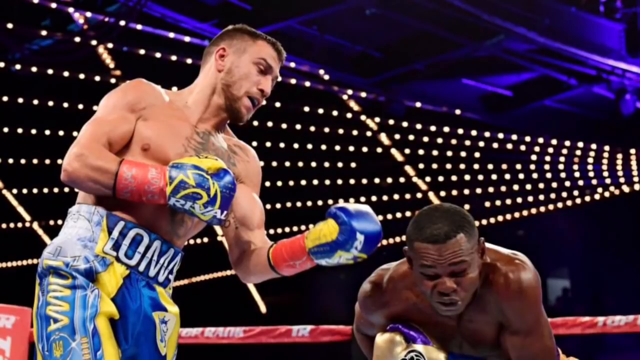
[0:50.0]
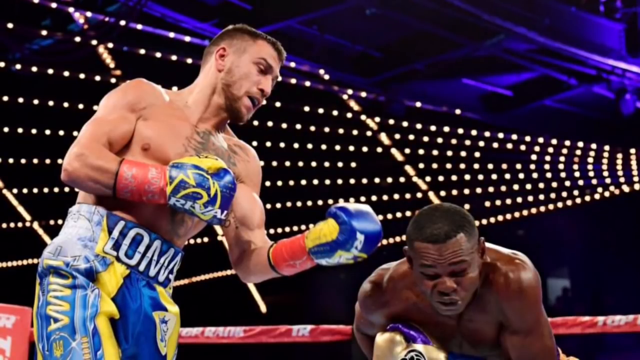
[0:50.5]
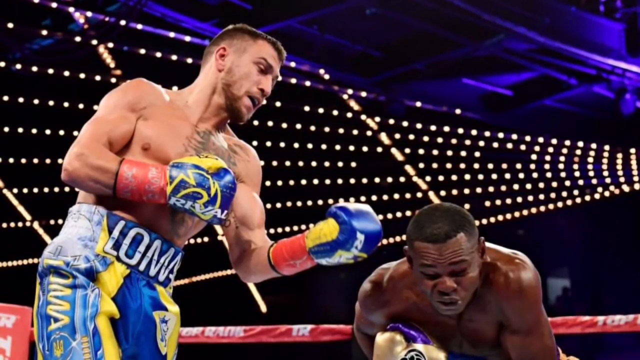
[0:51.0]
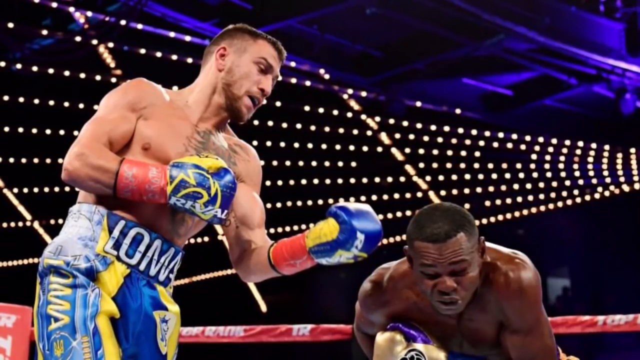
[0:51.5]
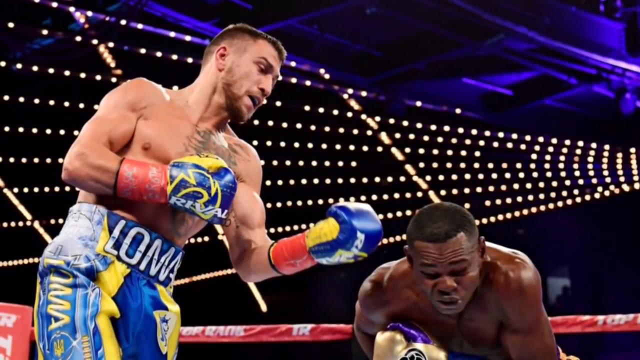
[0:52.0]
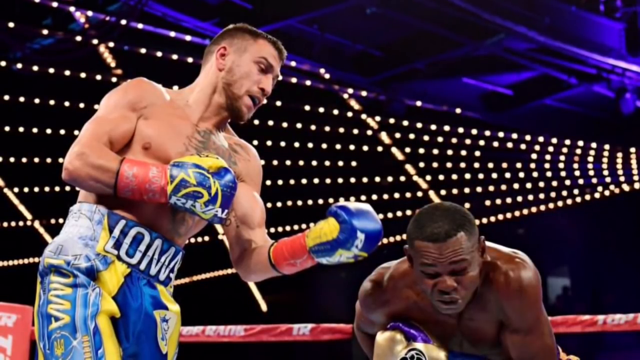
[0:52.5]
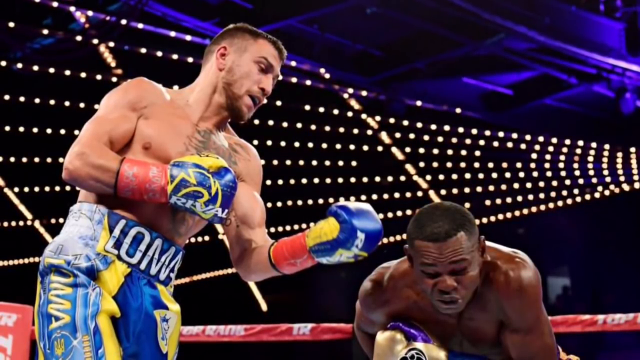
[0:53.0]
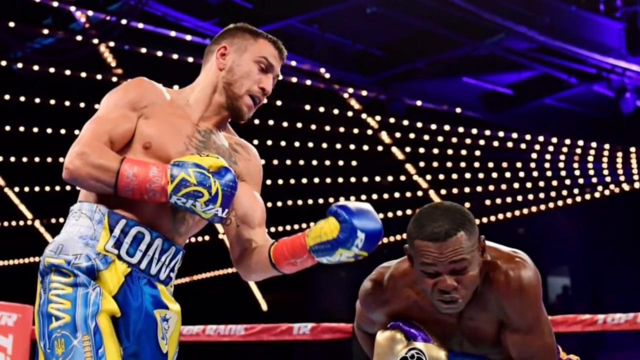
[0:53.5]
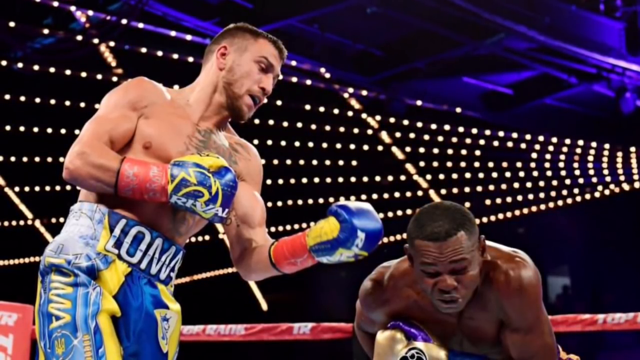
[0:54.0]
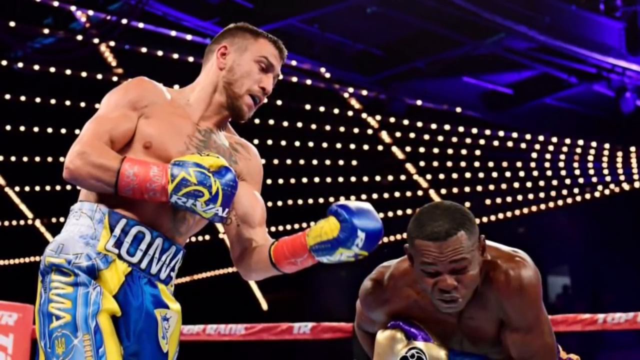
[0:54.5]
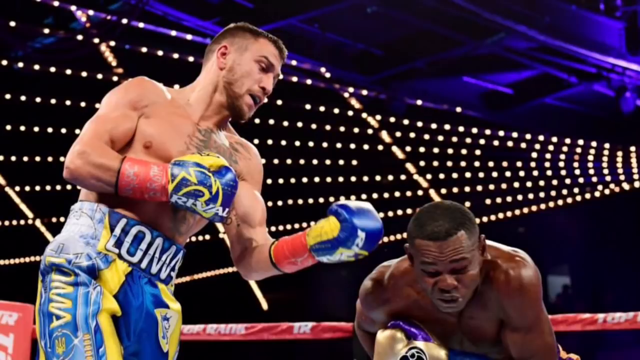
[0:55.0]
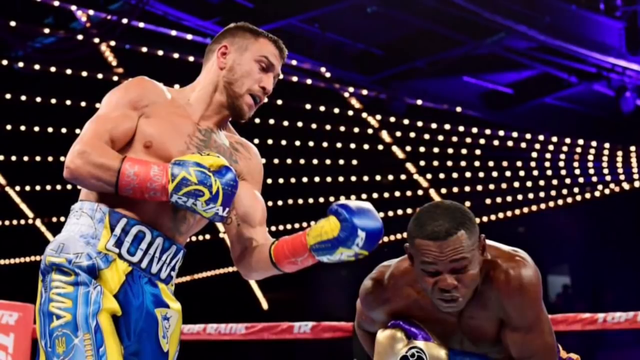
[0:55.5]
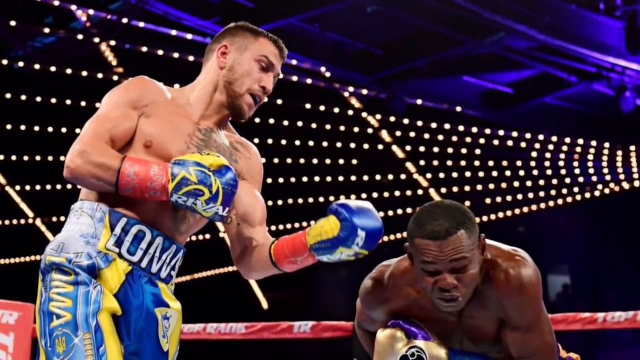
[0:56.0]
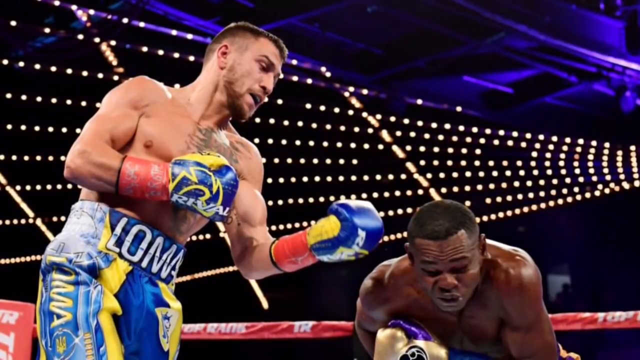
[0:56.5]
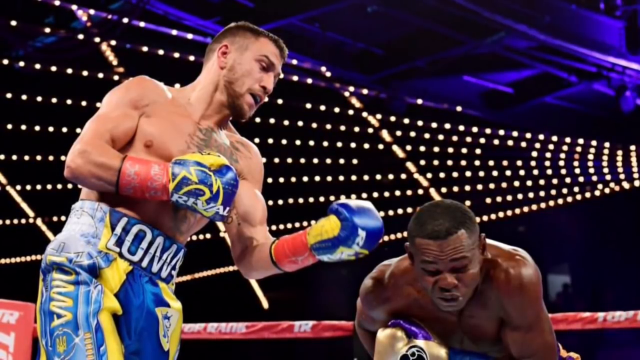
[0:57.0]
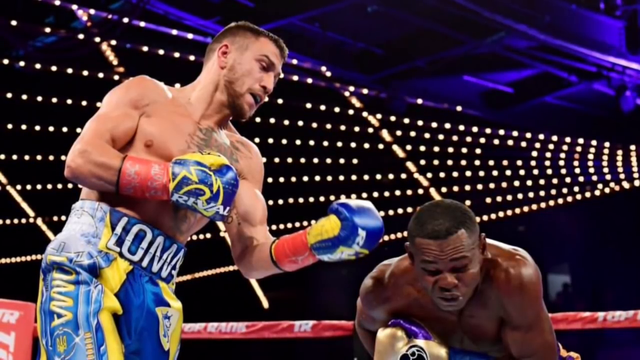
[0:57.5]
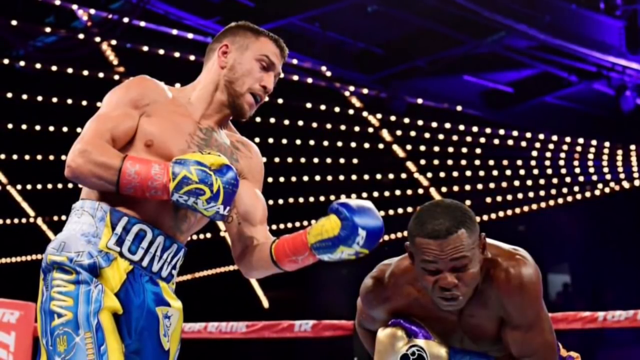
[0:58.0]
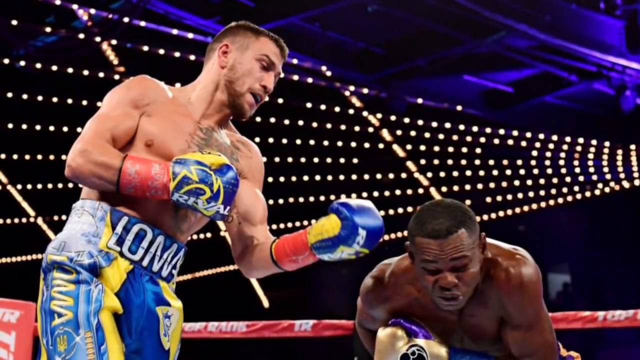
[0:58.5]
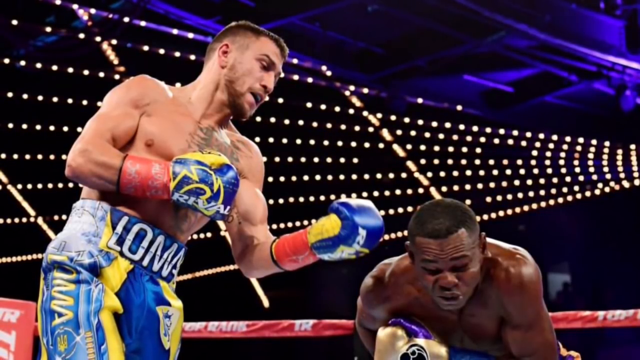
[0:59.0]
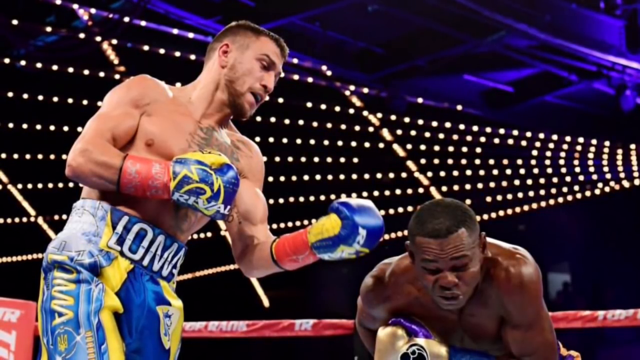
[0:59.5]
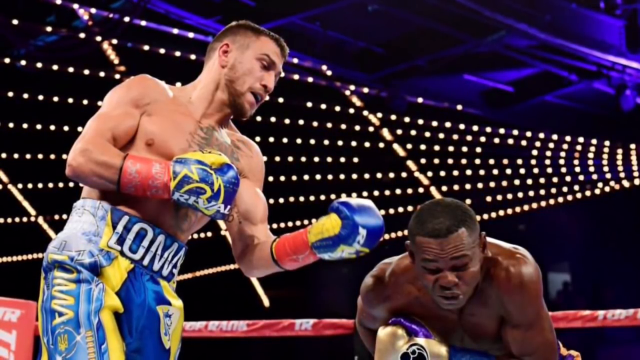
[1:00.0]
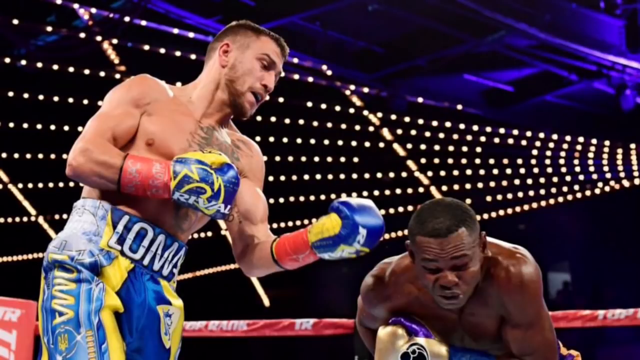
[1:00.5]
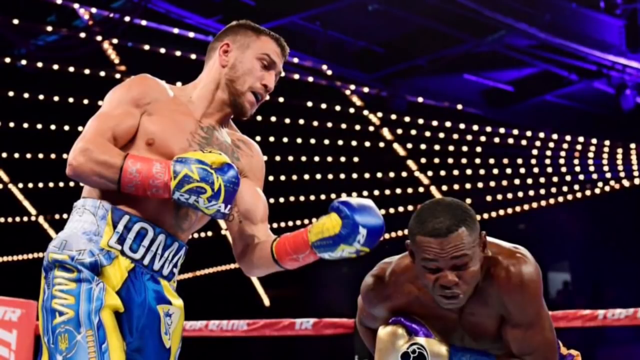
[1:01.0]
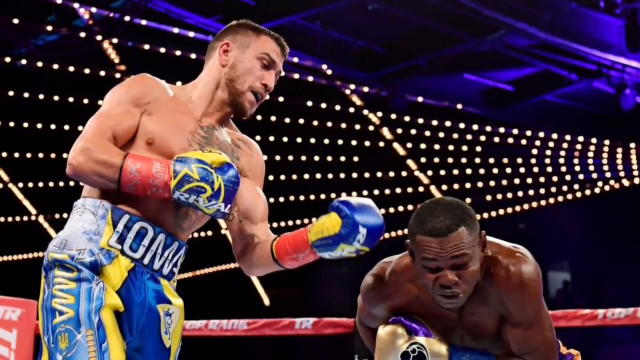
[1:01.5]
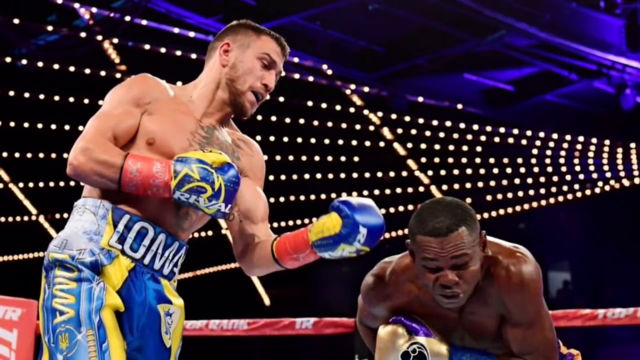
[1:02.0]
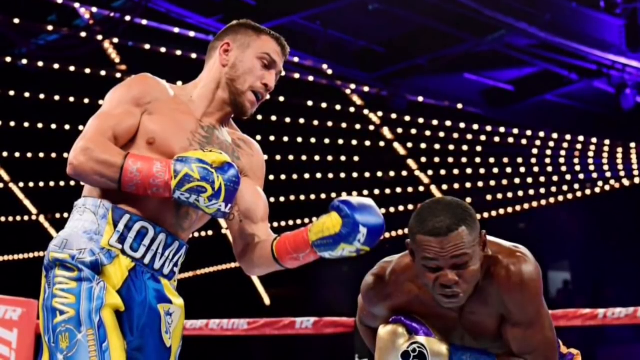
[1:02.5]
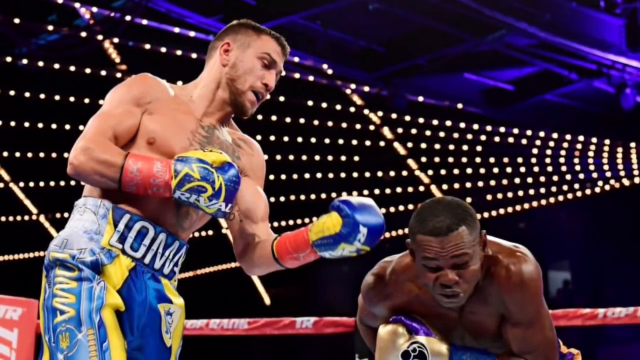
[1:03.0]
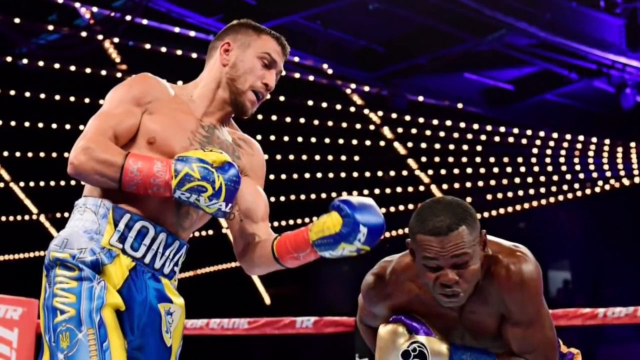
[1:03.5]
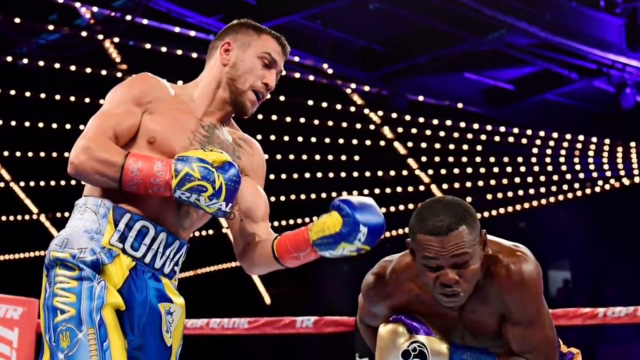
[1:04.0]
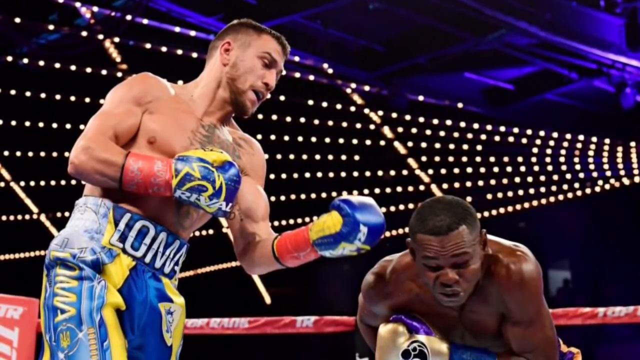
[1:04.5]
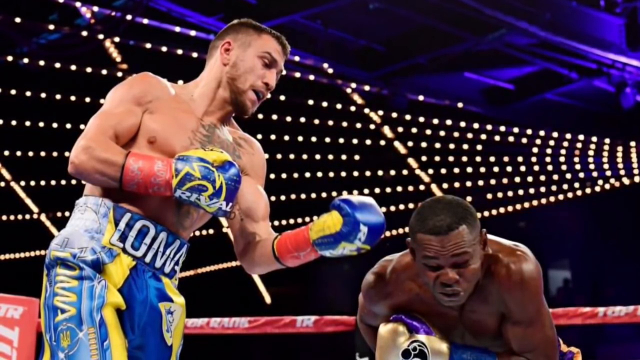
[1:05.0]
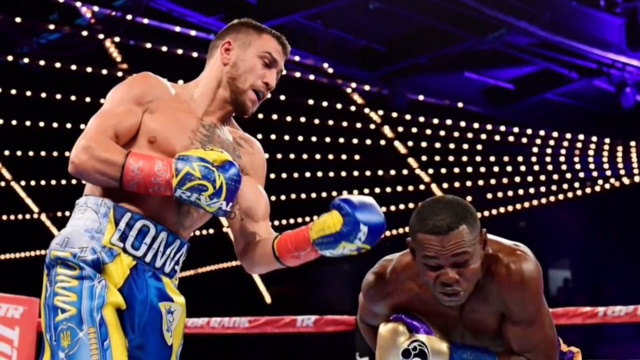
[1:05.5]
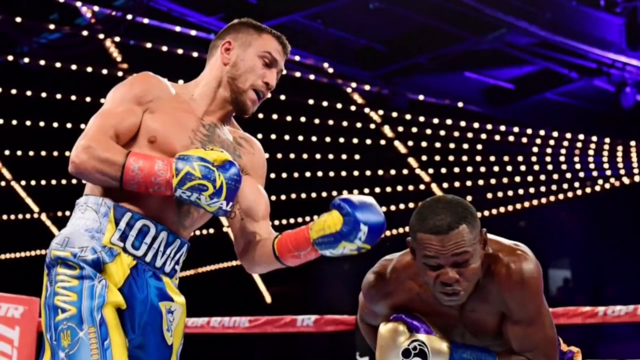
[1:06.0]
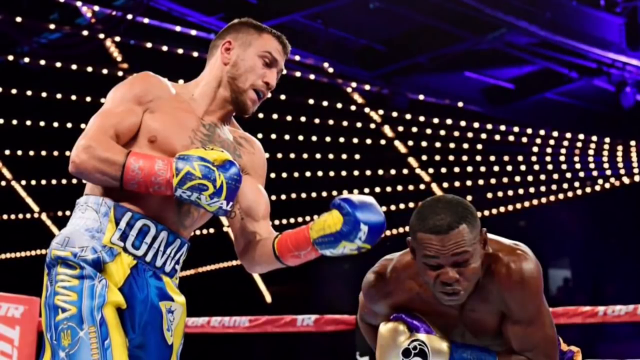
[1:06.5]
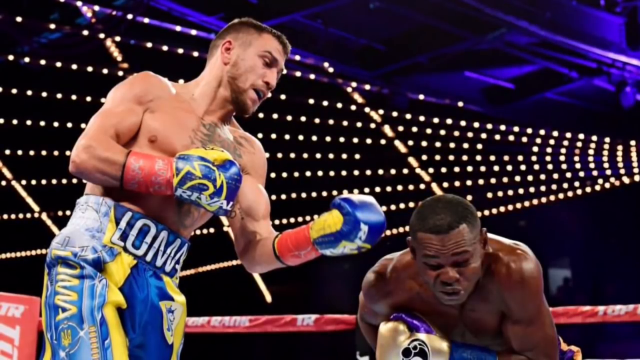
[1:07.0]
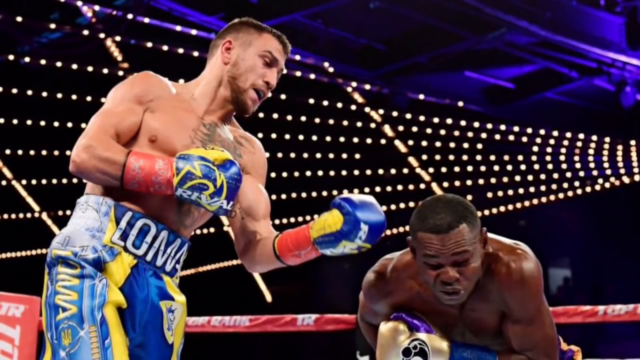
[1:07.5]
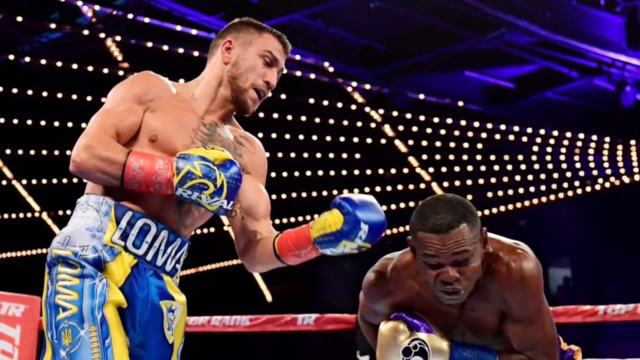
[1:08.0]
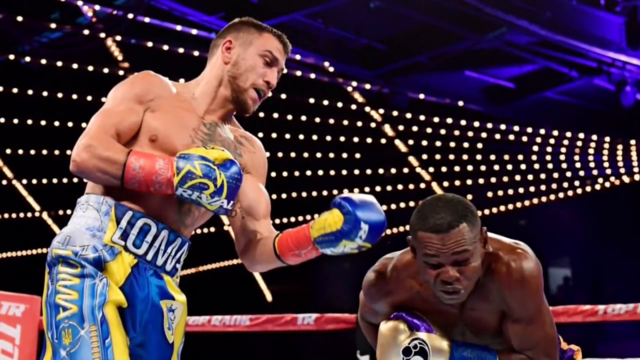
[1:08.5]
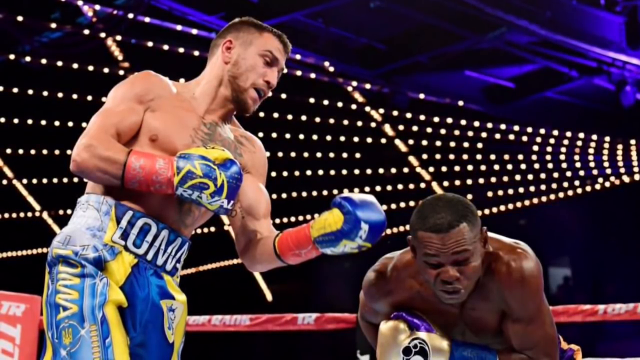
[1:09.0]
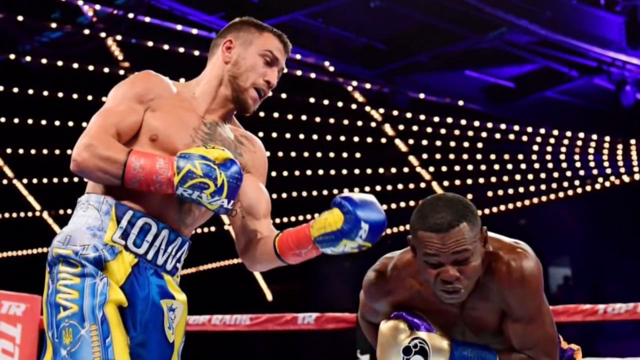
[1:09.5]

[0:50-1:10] At the top of the screen is the top of the building, where the ceiling has a sort of dark blue illumination. Hundreds of lights fill the background. The person on the left, who has hit the person on the right, has a tattoo of an indistinct shape on his left pectoral muscle, and the lights reflect off his sweating shoulders, creating a shine. Across the bottom of the screen is the ring, made of a red material with "TR" and the words "top rank" written around it. The image stays still on screen. The person on the right, who is on the floor, has his eyes closed and is grimacing, with lines visible in his forehead.